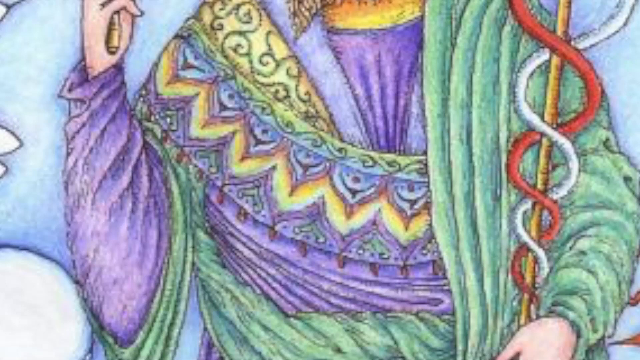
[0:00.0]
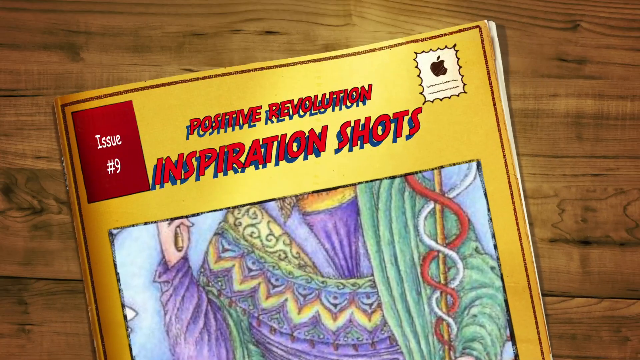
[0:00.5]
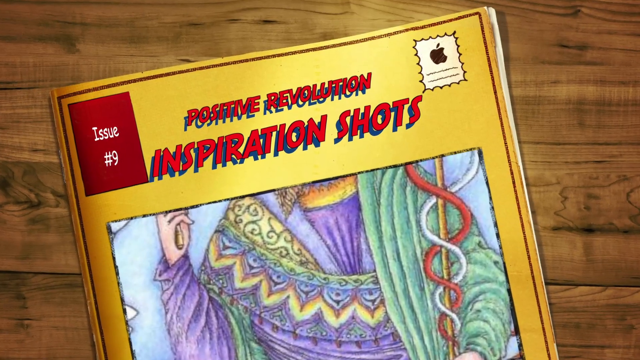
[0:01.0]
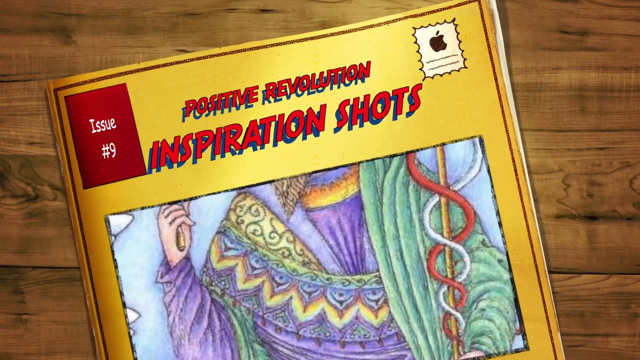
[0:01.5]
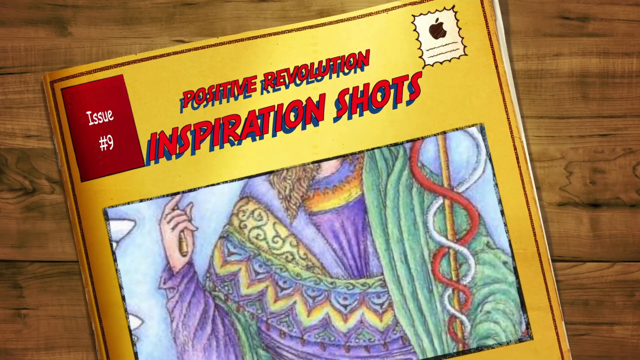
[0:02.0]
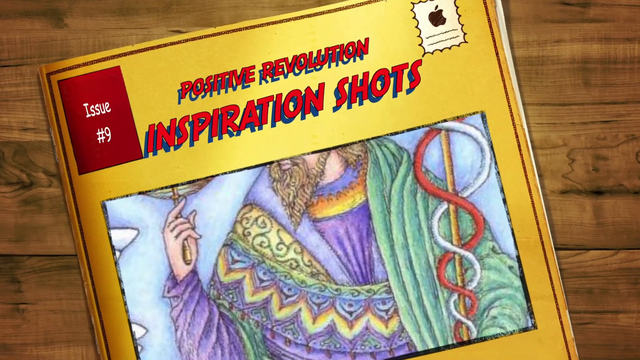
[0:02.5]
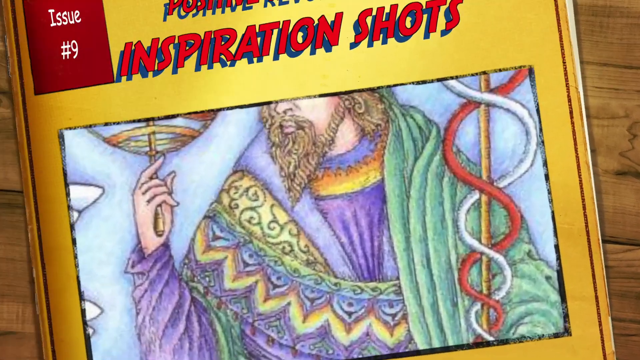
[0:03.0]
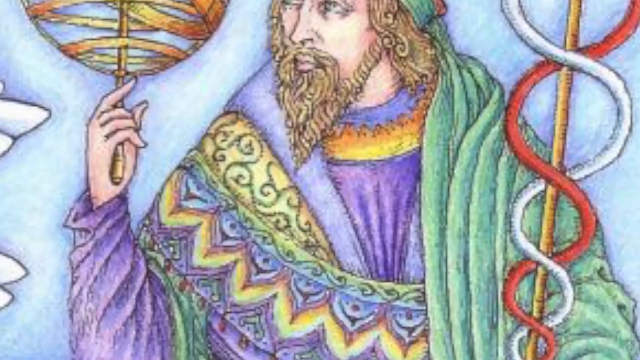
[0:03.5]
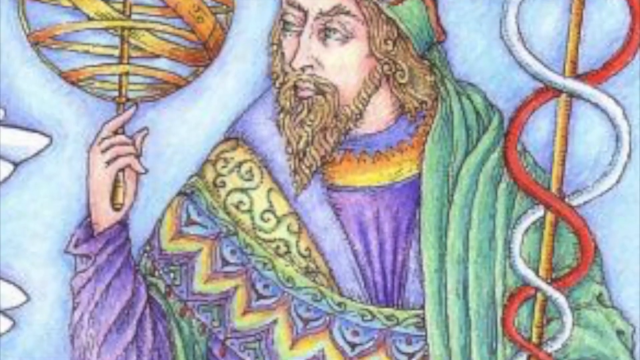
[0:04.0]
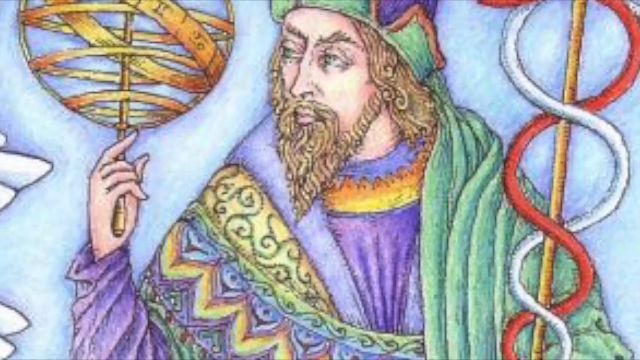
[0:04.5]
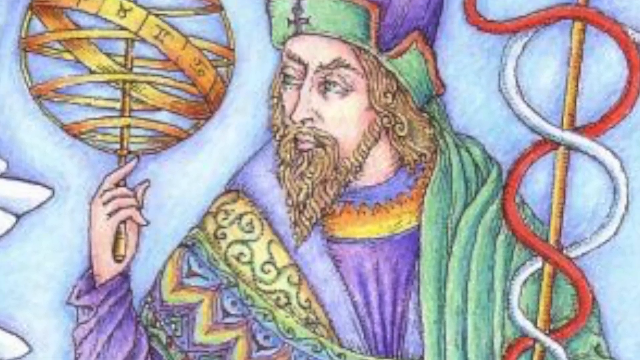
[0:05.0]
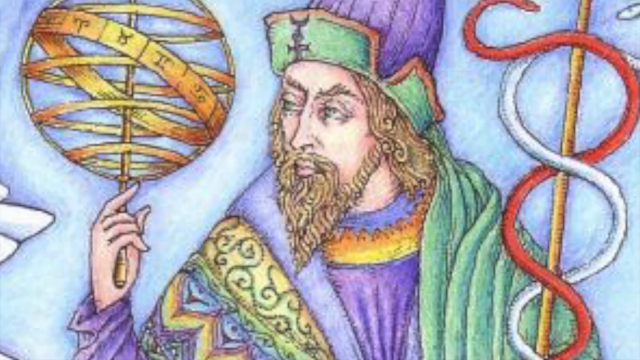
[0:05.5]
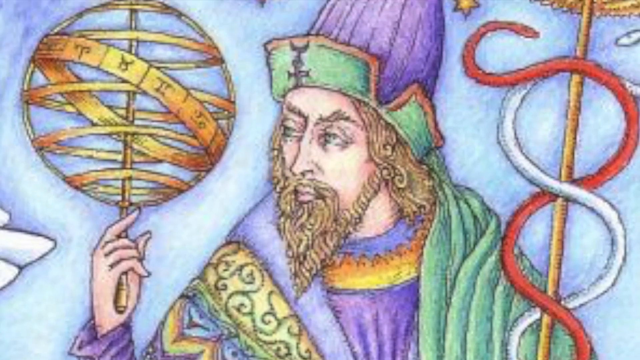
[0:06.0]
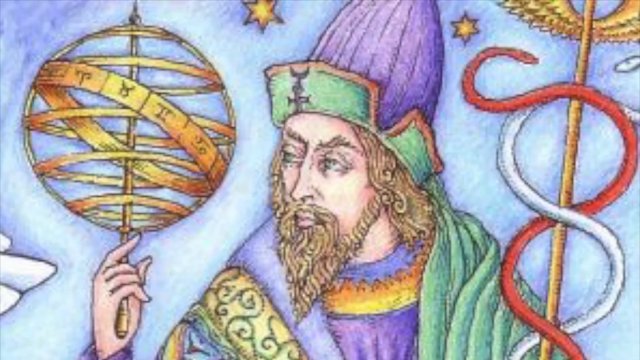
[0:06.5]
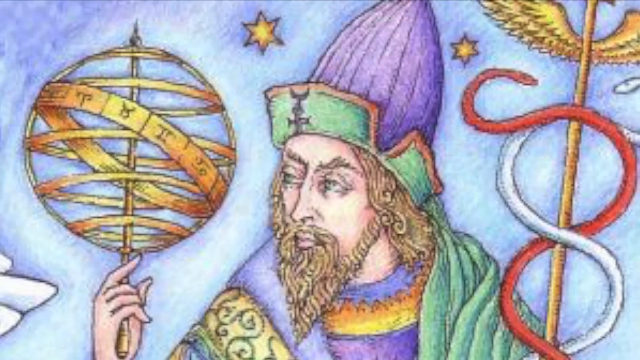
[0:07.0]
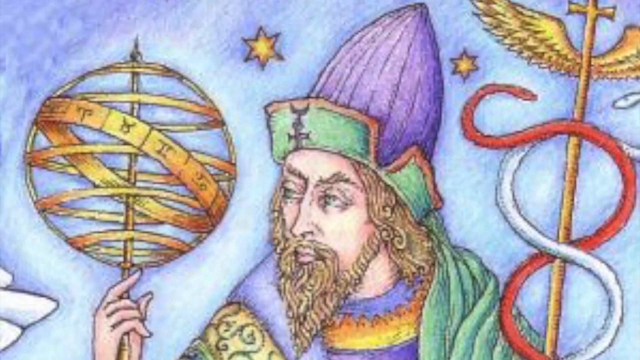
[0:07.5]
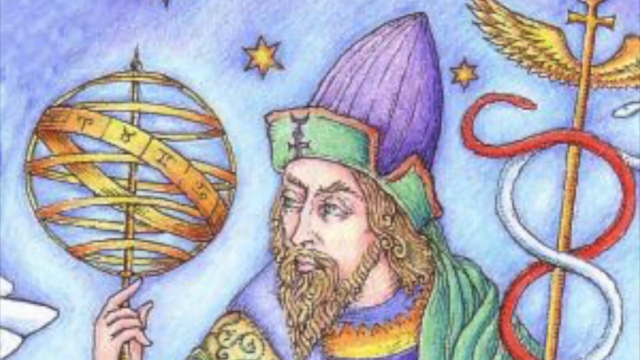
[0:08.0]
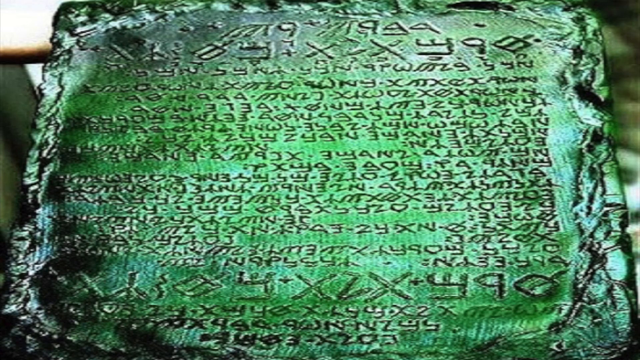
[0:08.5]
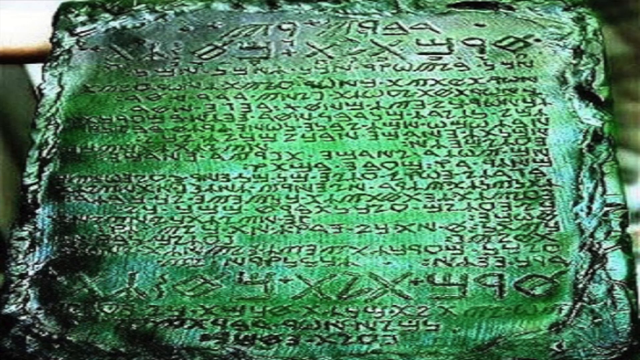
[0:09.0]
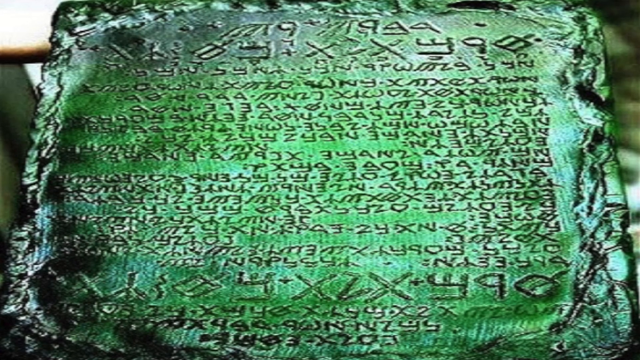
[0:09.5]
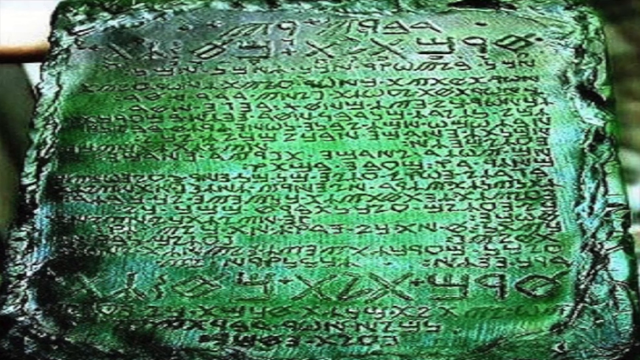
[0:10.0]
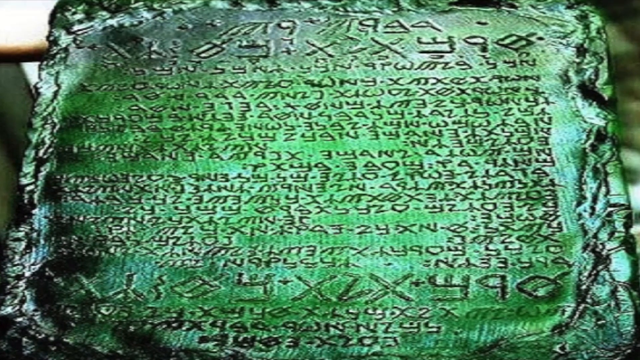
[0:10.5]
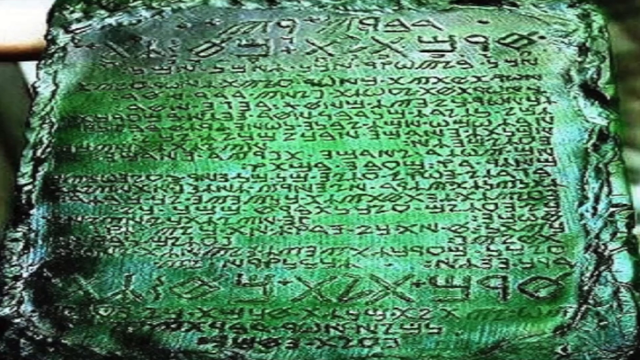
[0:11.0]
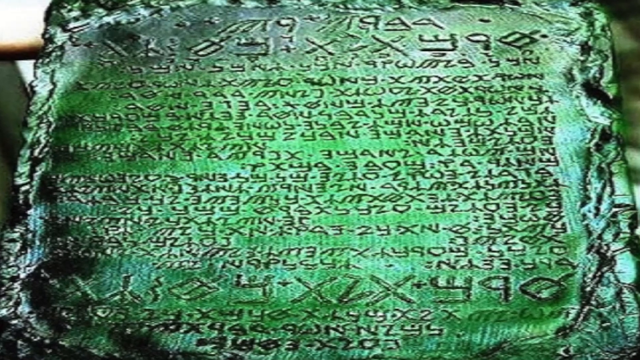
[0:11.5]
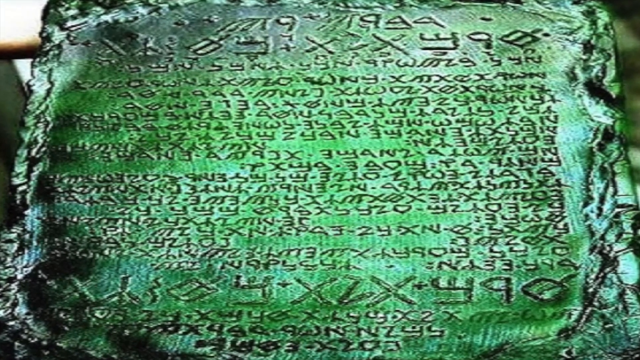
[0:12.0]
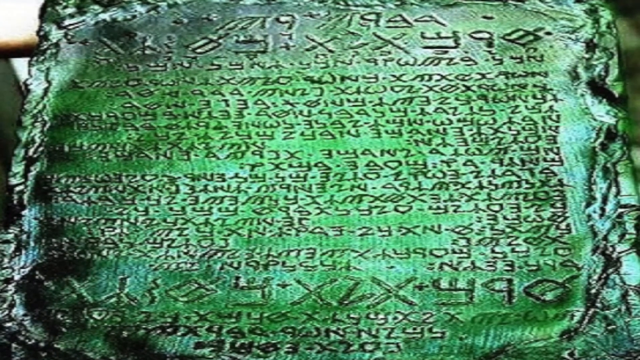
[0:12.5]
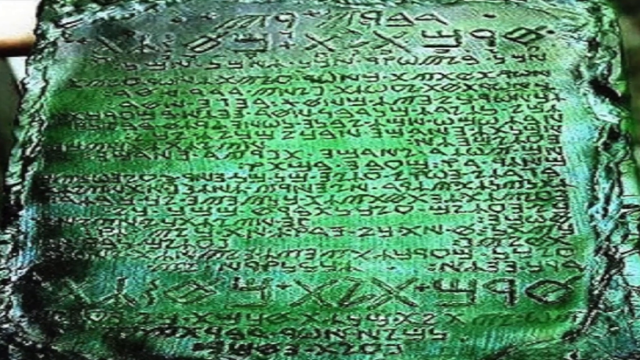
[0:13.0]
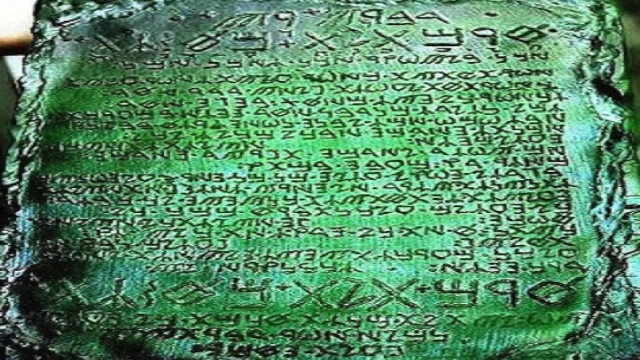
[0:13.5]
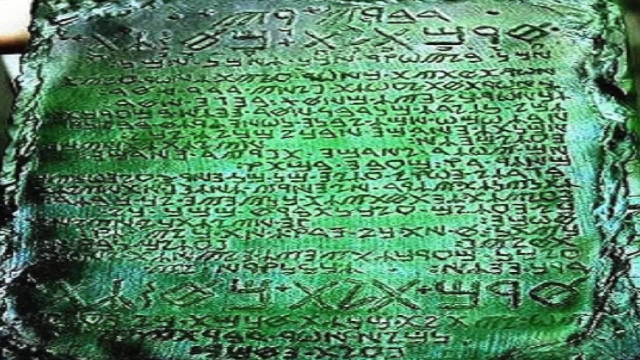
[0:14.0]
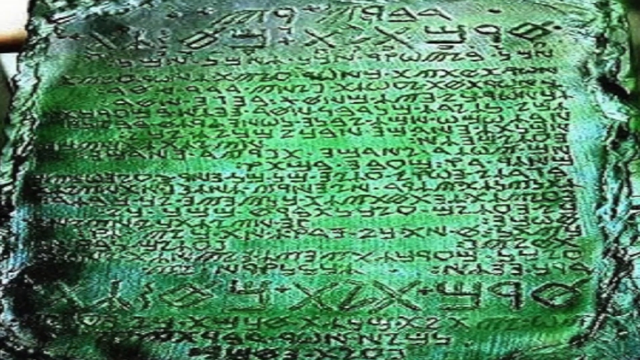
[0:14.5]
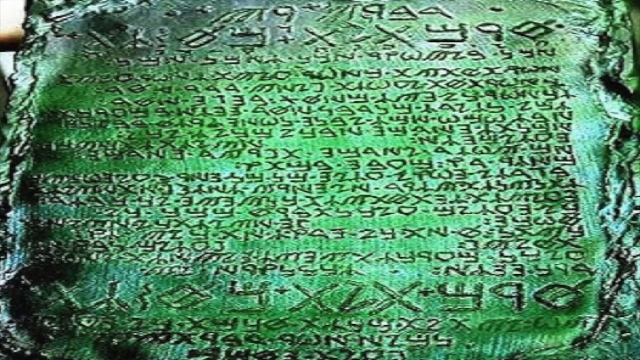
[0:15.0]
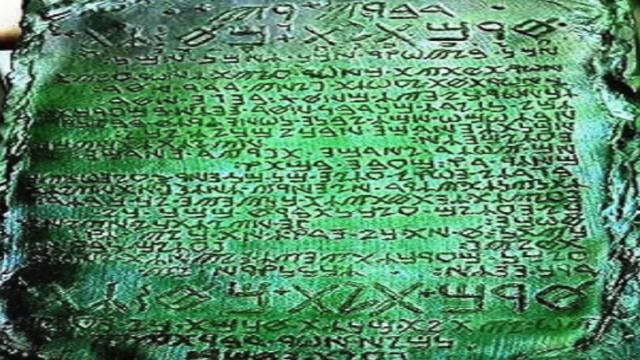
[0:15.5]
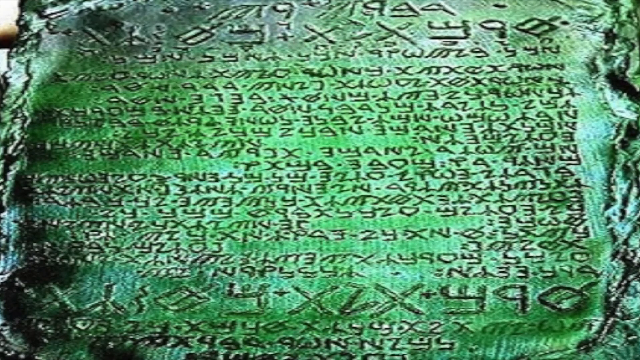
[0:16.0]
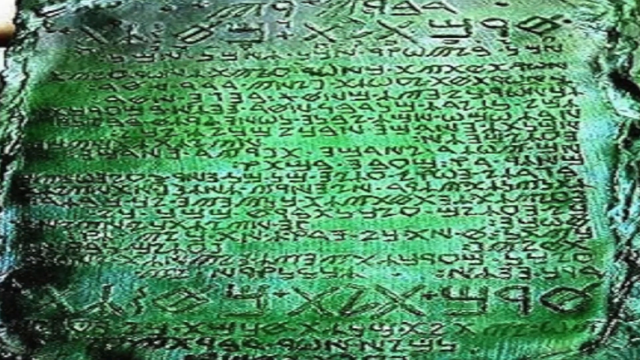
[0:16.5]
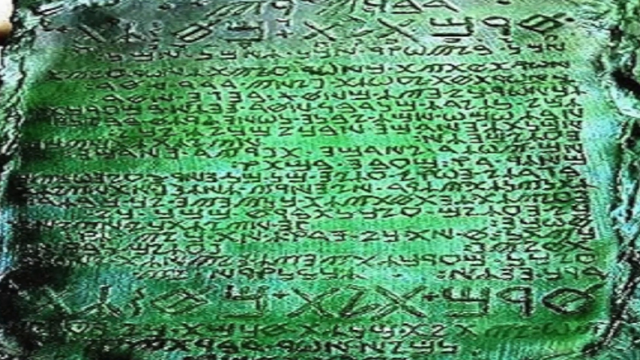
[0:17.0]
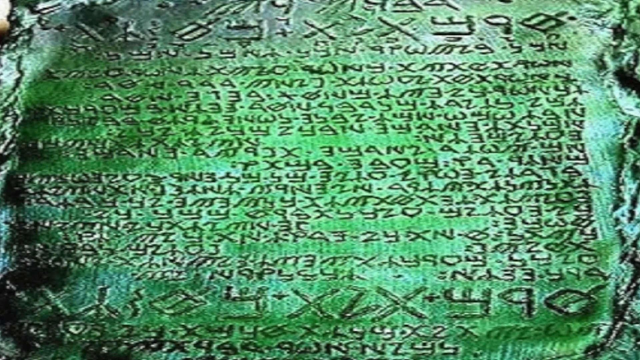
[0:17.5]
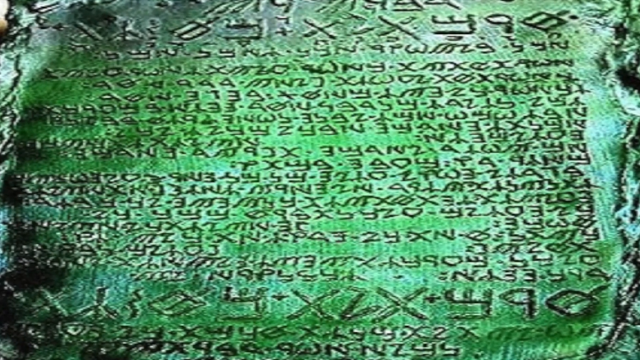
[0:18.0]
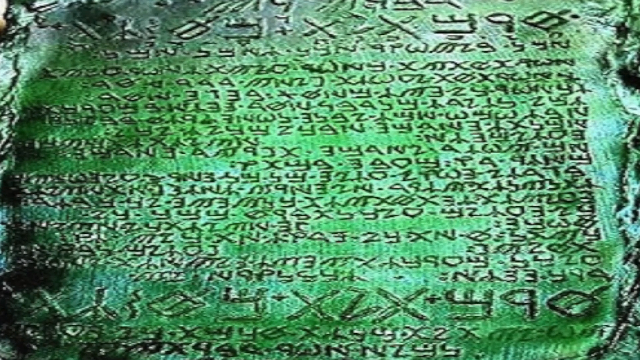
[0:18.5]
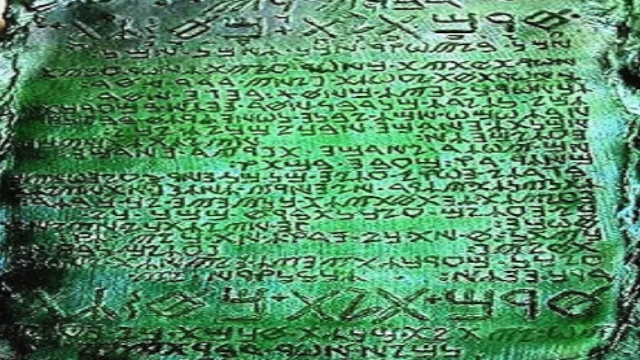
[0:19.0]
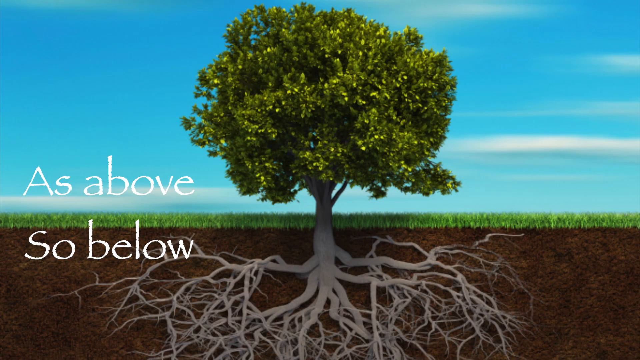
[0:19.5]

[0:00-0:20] What seems to be an orange comic book looks like it was thrown on a table. A red square in the left corner says "issue number nine," and the comic book's caption says "positive revolution inspiration shots." The camera zooms in to the image on the front page, and the whole focus is on that image, which appears to show a wizard. Many colours are visible: purple, green, yellow, gold, white and red. His outfit is green and purple, and he has a hat. He carries something like a globe in his right hand and a stick with twirls around it in his left hand. The camera zooms upwards, showing that the stick has wings on its top end and that there are stars in the sky. The scenery changes to something like a green book made out of stone with foreign-language writing on it.